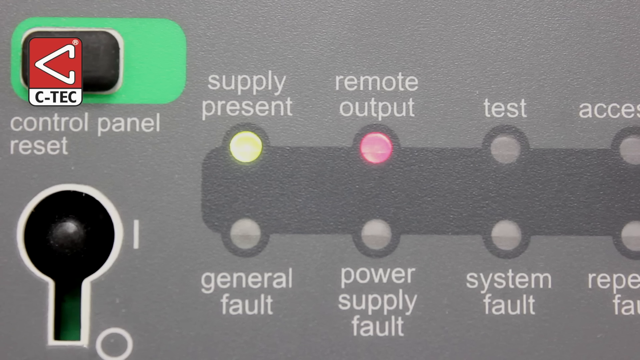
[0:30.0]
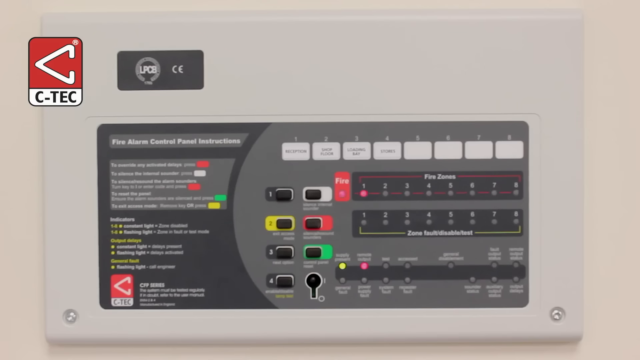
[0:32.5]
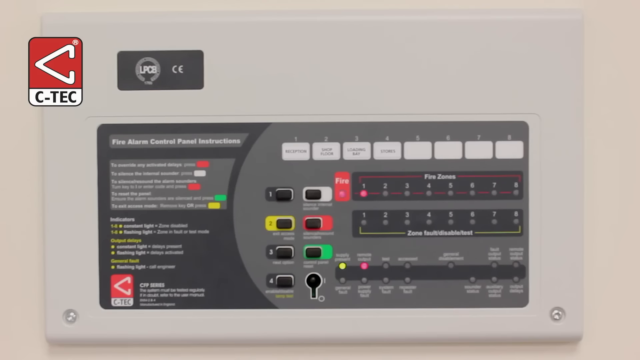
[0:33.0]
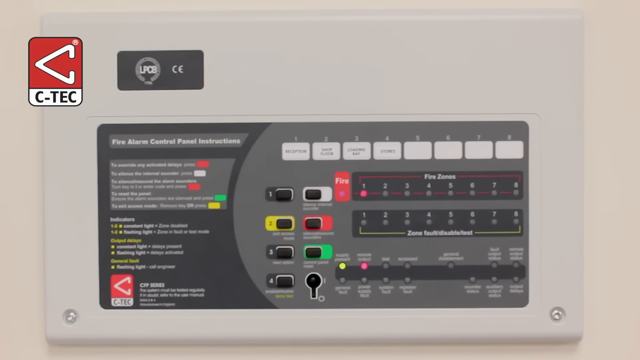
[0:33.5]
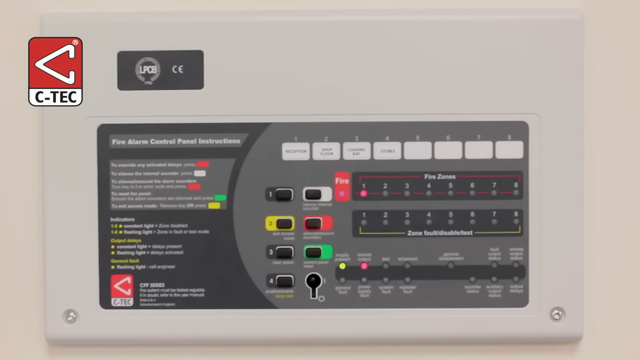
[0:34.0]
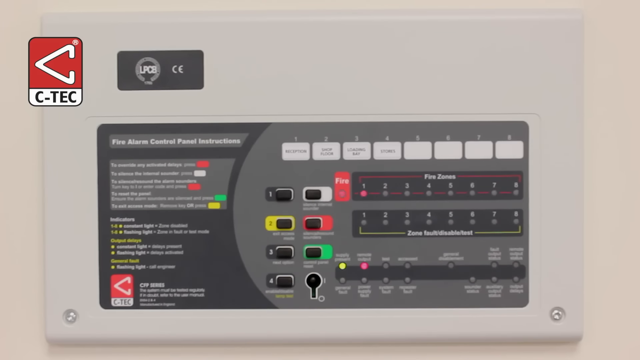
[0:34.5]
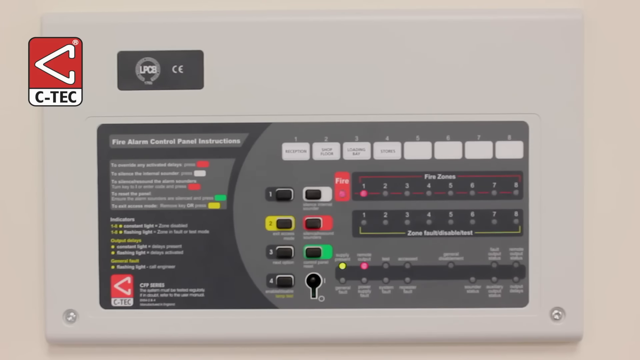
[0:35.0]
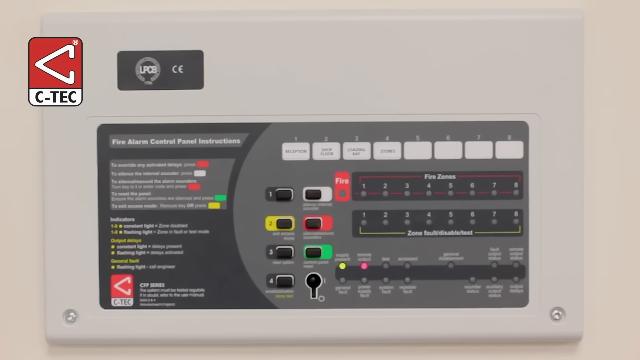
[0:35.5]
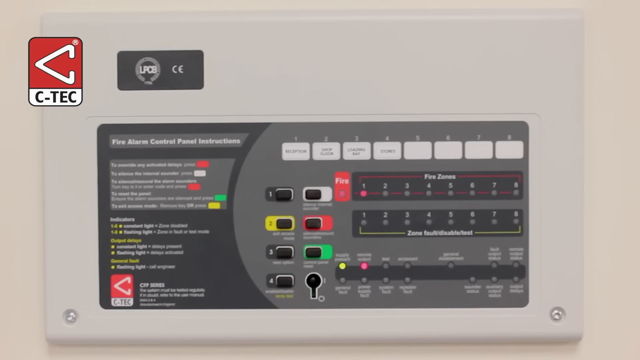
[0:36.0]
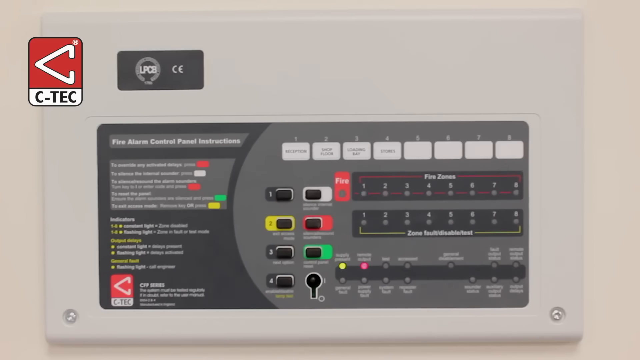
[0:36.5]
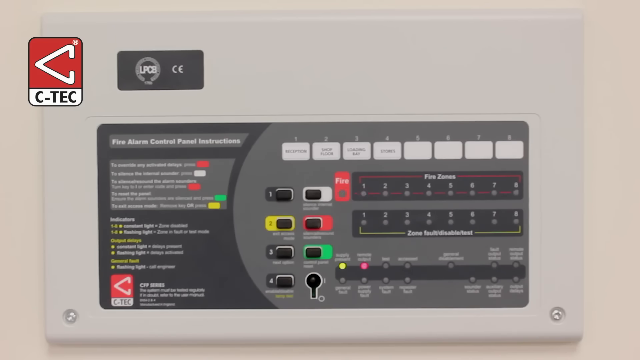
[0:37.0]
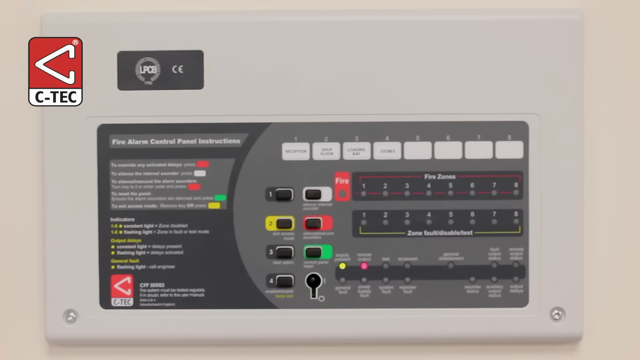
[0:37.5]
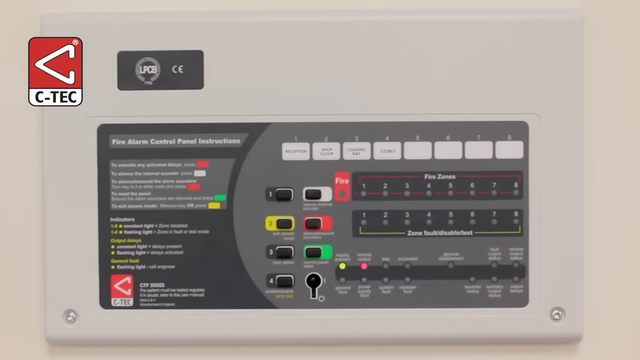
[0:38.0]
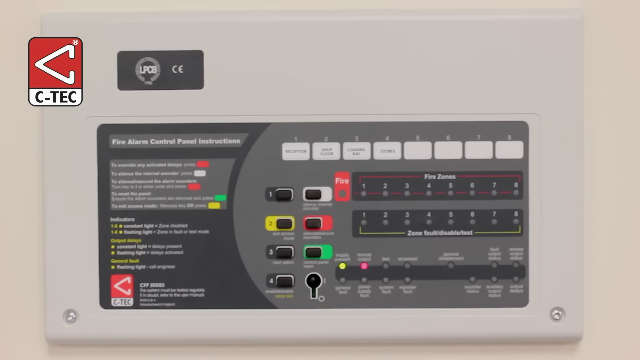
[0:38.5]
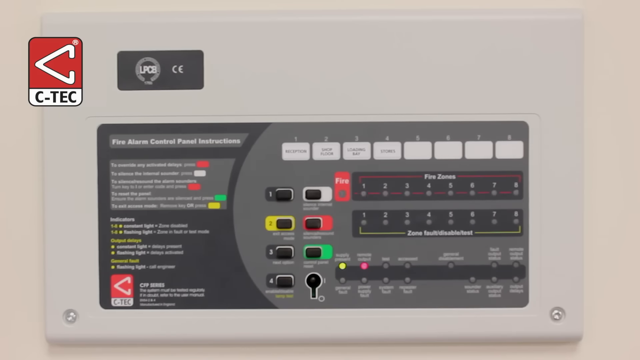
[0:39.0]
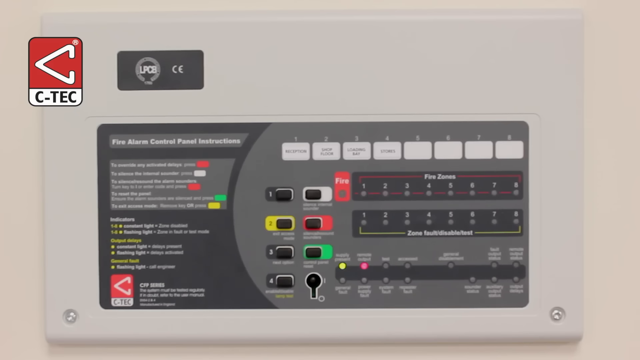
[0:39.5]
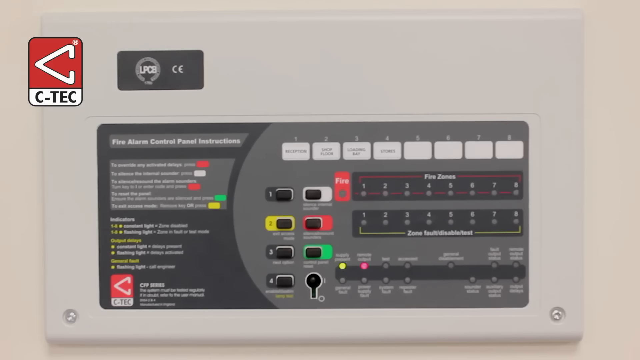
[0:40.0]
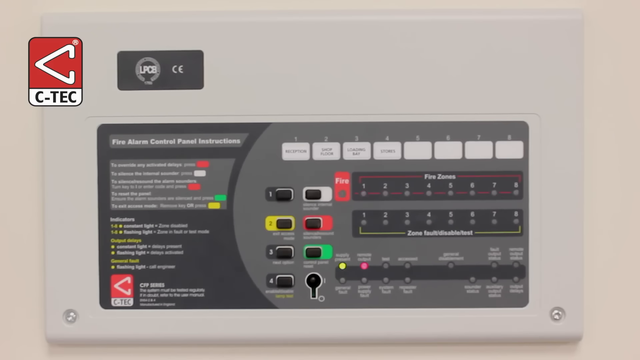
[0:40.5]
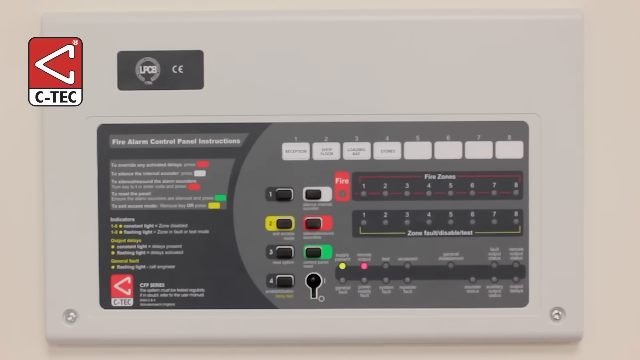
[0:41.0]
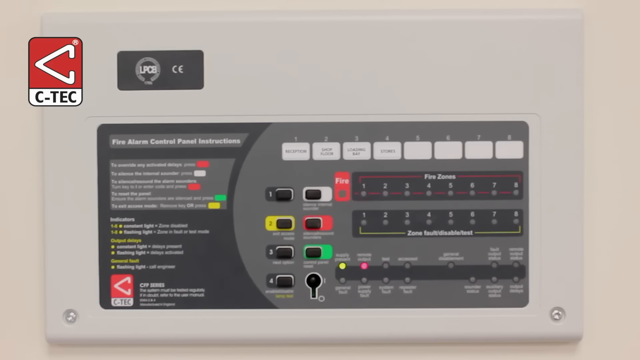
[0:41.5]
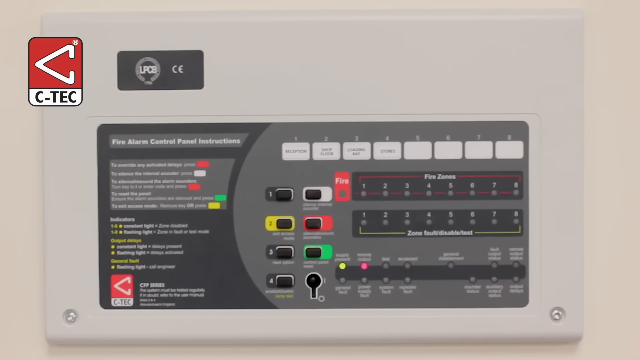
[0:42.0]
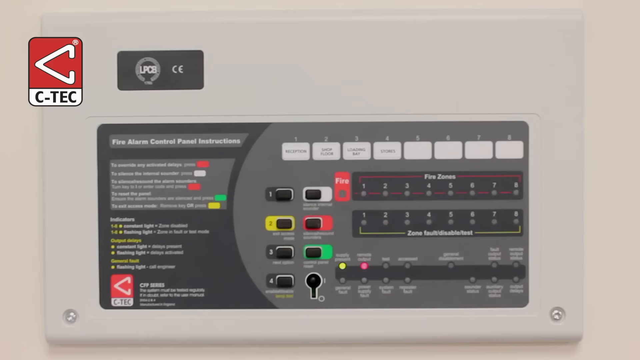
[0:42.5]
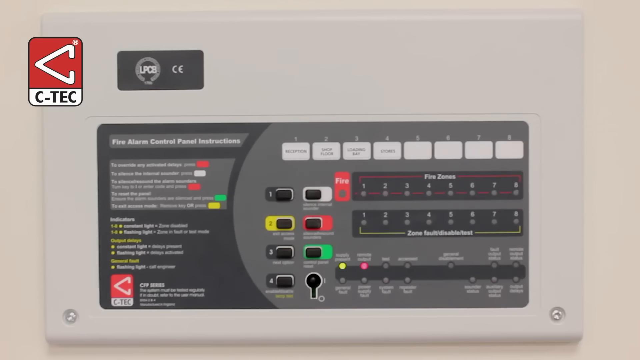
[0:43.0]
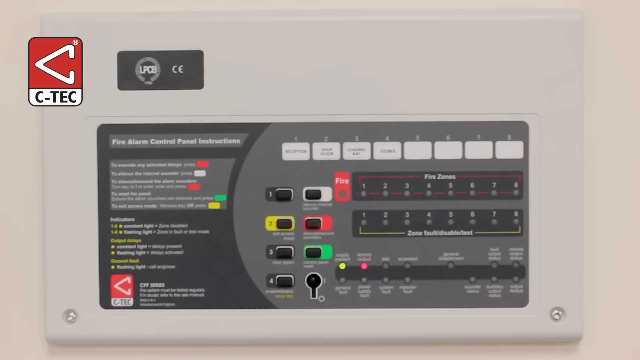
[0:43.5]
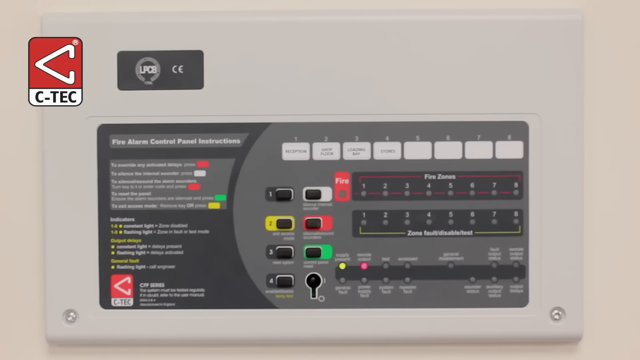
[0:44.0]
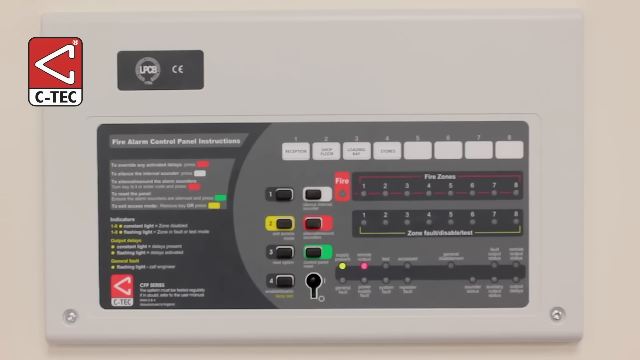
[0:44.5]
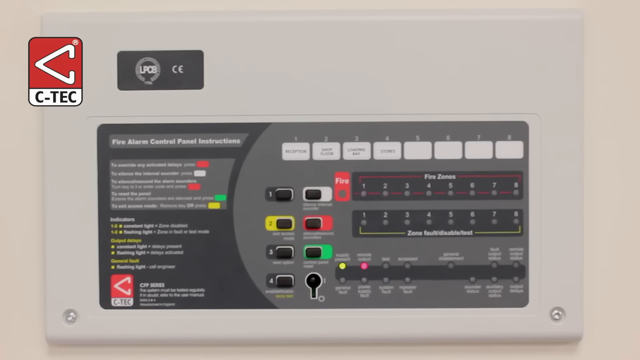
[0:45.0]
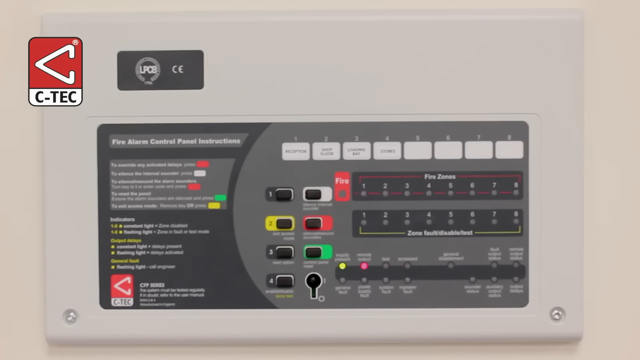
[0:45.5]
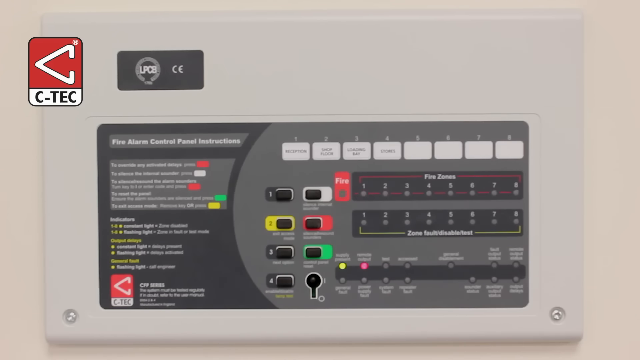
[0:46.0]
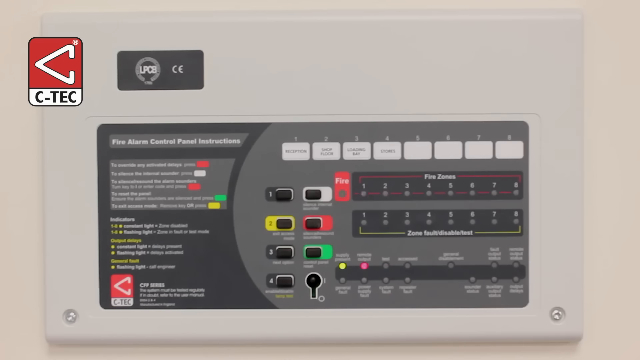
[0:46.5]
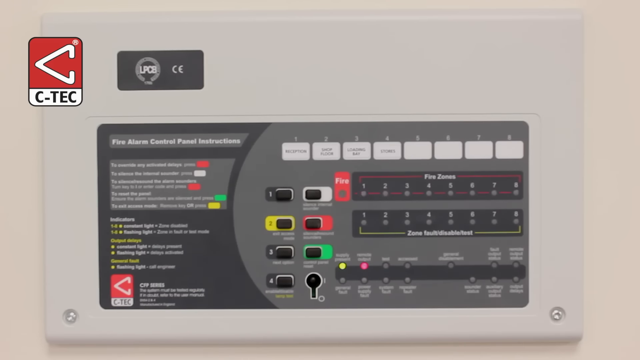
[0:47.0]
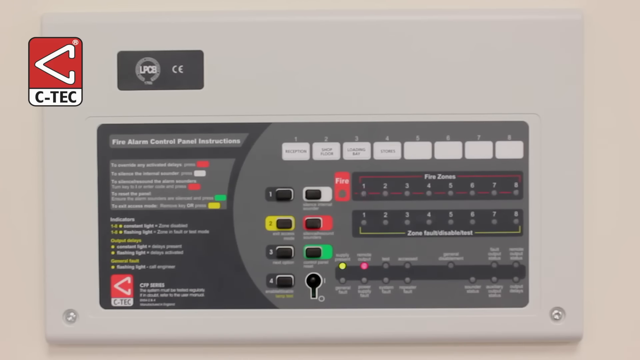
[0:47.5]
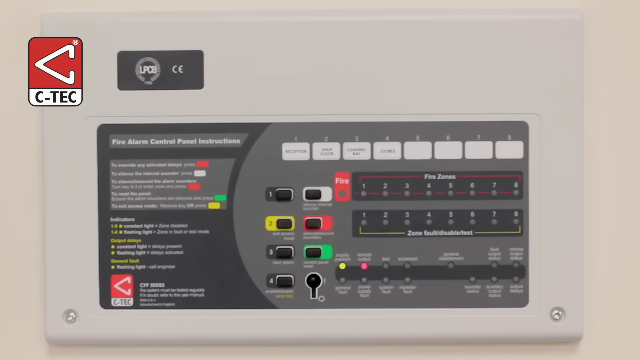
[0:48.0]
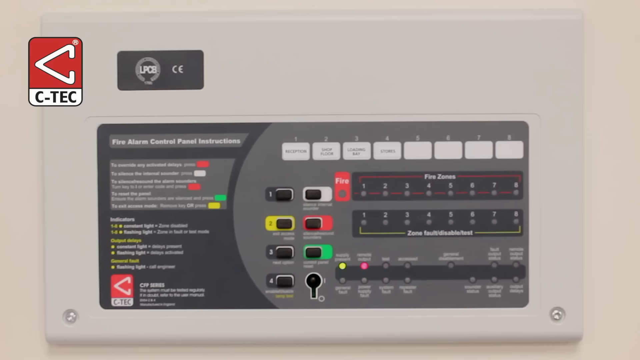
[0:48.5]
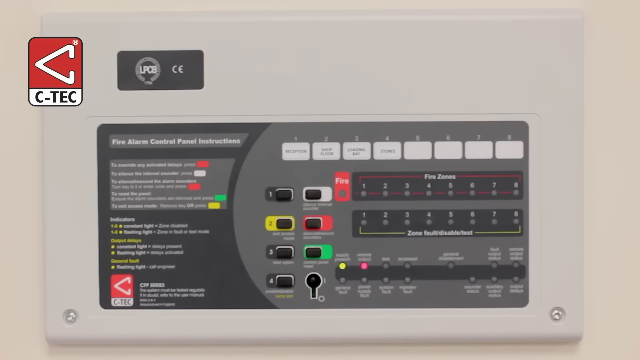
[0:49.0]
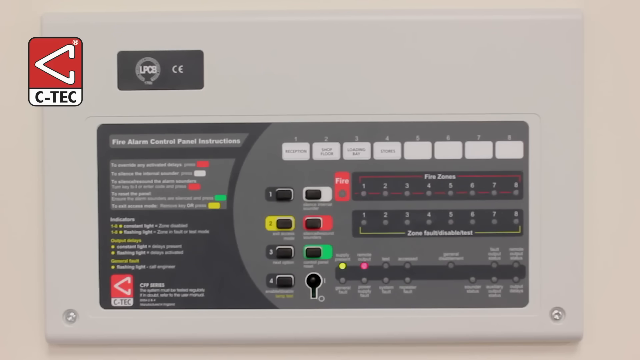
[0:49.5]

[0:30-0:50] The video zooms into a different section of the control panel, the supply present and remote output sections in the bottom right of the panel. The supply present light is the top left light and is green, and the remote output light to its right is red. Below are general fault and power supply fault, neither lit, and to the right are test and system fault, also unlit. To the left it says "control panel reset", with a button for it that has a green outline. Four lights are lit in total: the two flashing lights for fire and the fire zone, and the green and red lights below. The camera then shows the panned-out view of the full control panel, where the two red lights continue to flash and the supply present and remote output lights stay a consistent green and red.